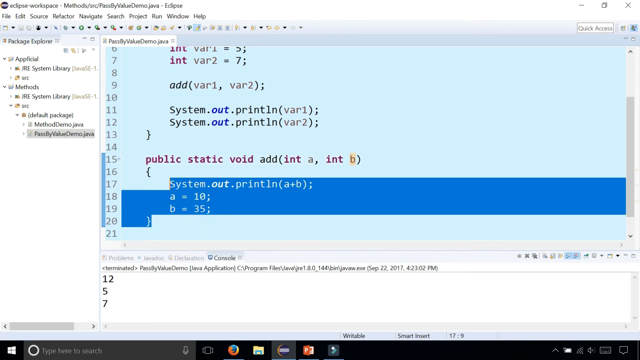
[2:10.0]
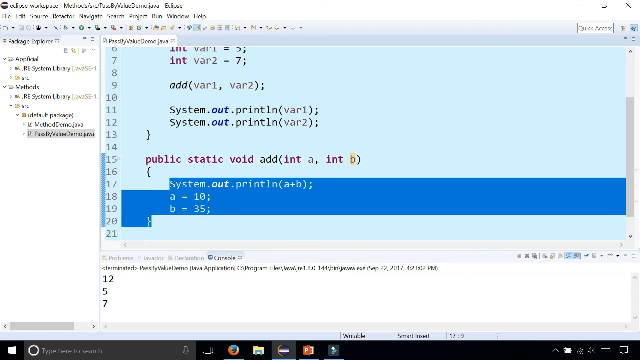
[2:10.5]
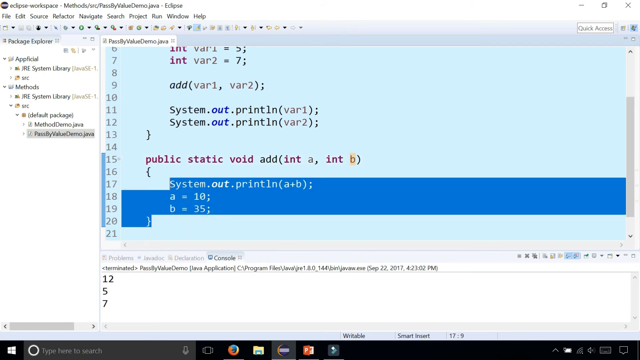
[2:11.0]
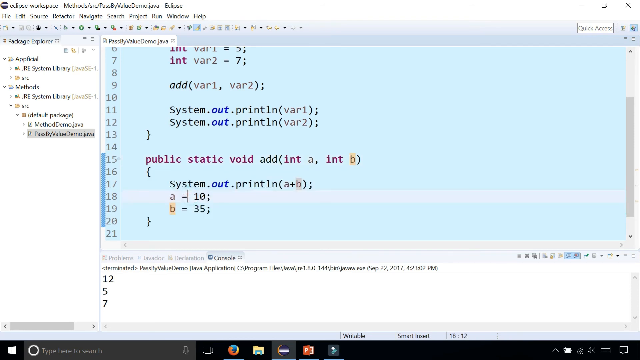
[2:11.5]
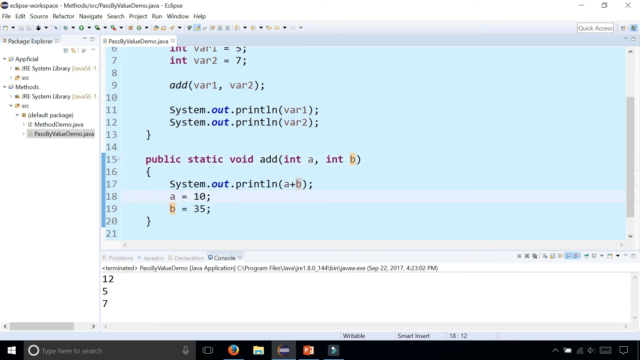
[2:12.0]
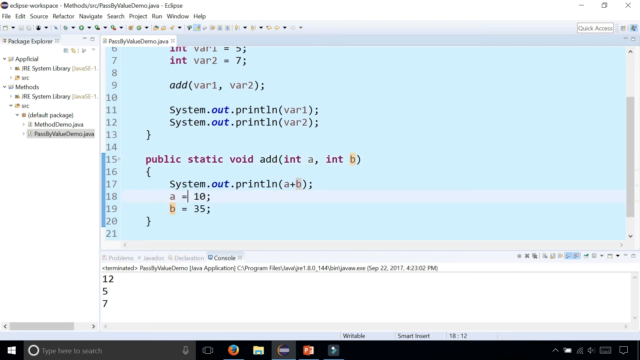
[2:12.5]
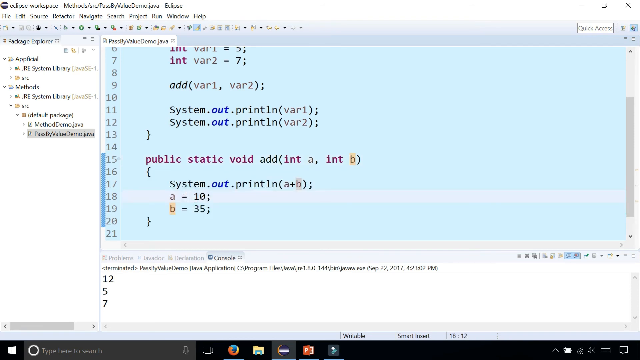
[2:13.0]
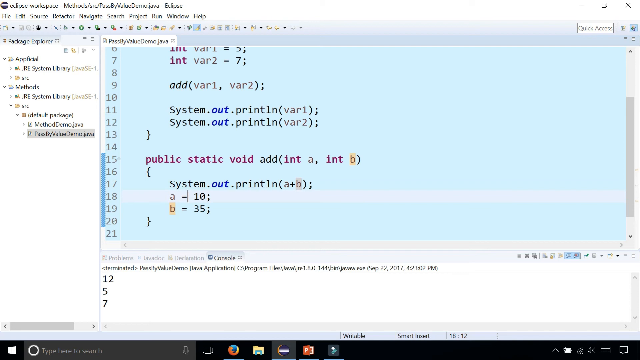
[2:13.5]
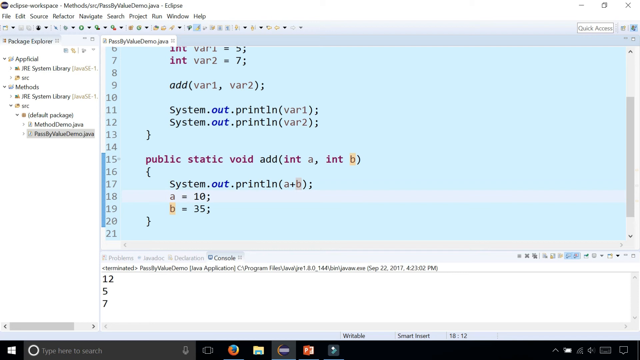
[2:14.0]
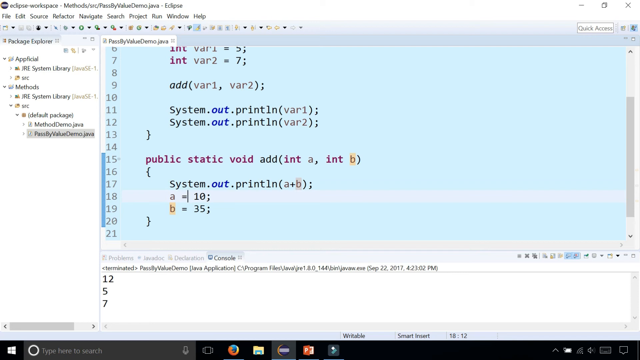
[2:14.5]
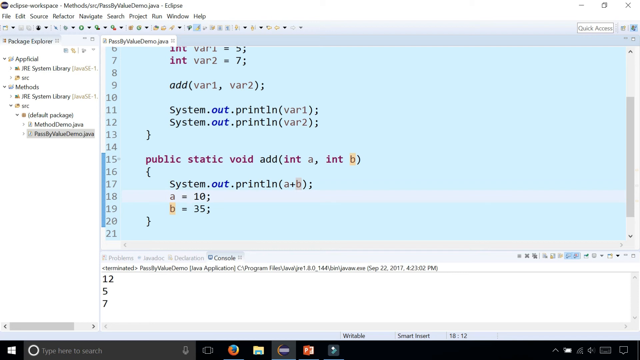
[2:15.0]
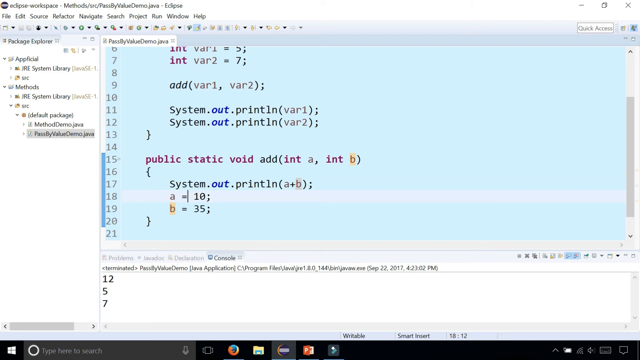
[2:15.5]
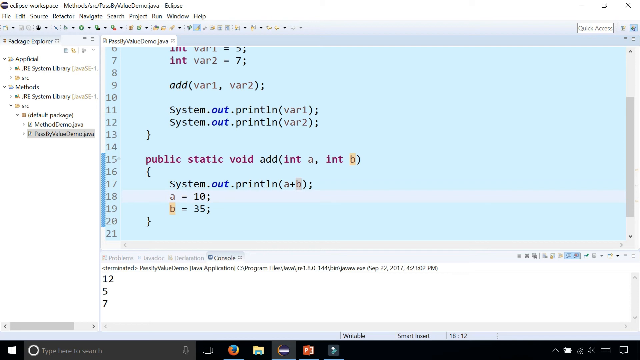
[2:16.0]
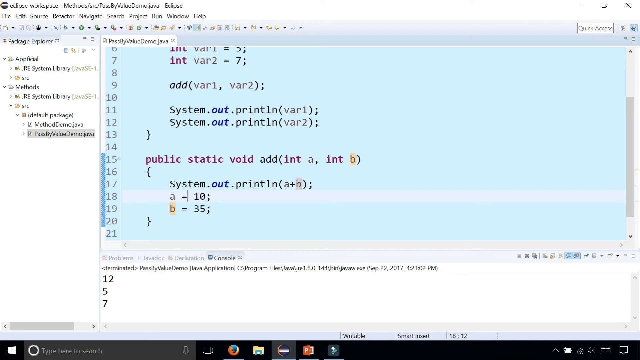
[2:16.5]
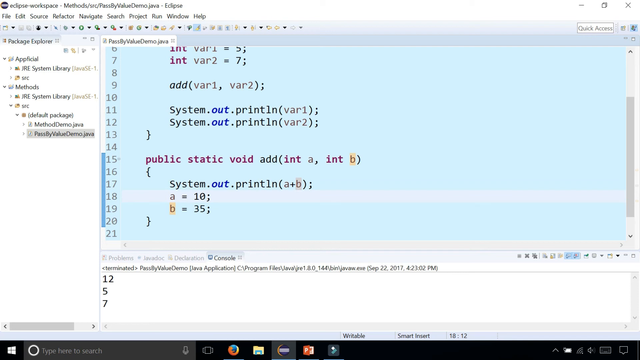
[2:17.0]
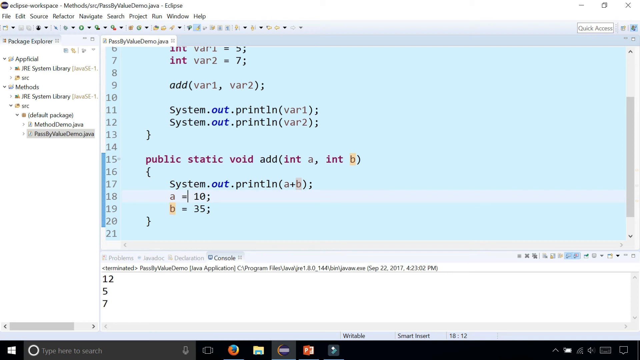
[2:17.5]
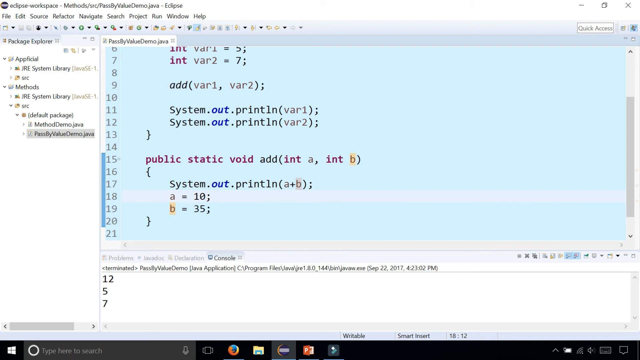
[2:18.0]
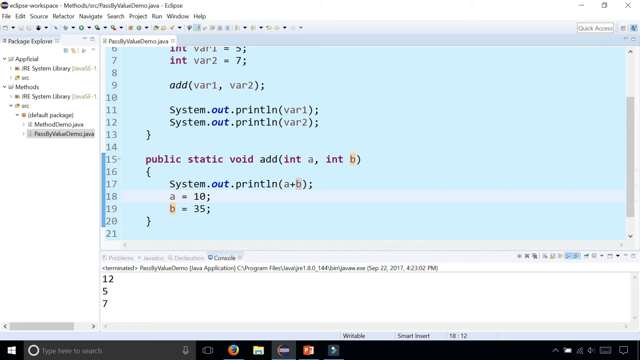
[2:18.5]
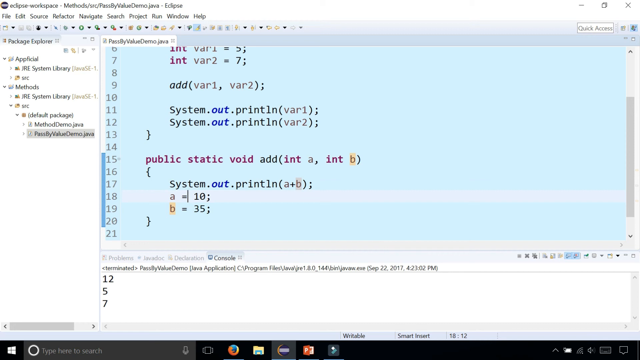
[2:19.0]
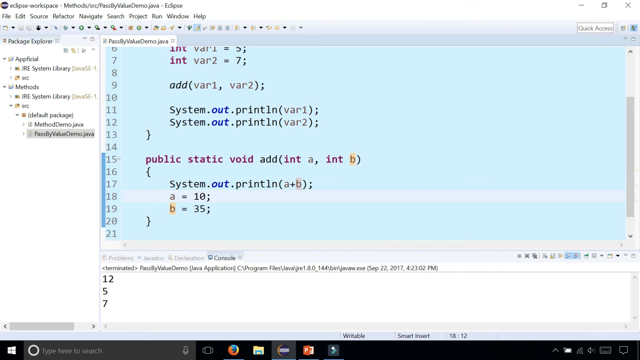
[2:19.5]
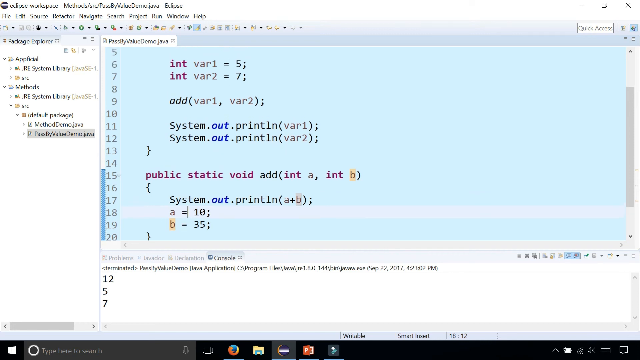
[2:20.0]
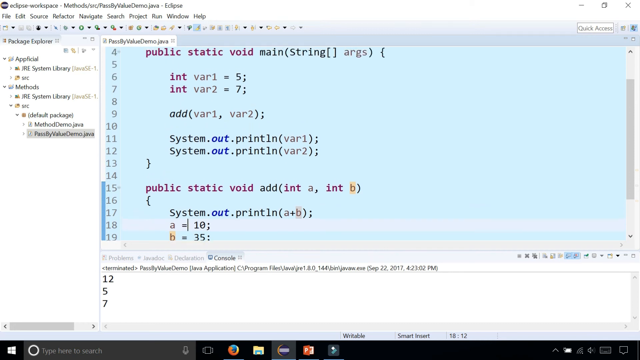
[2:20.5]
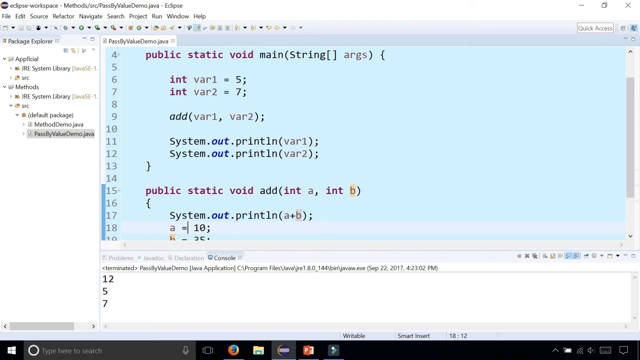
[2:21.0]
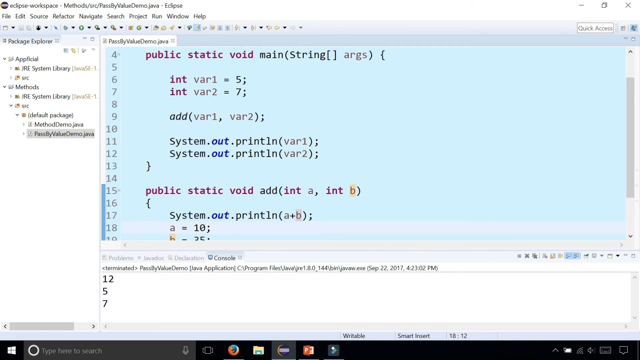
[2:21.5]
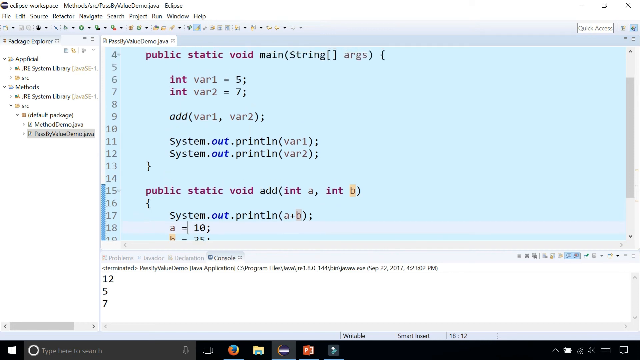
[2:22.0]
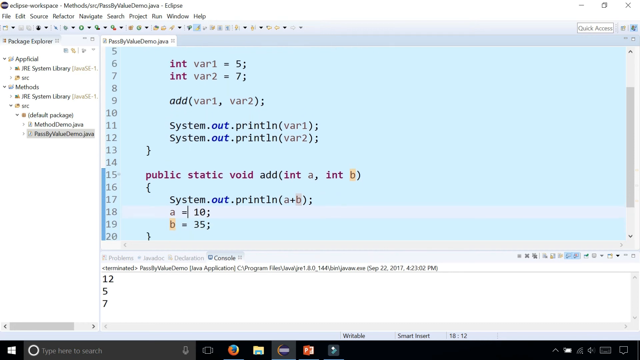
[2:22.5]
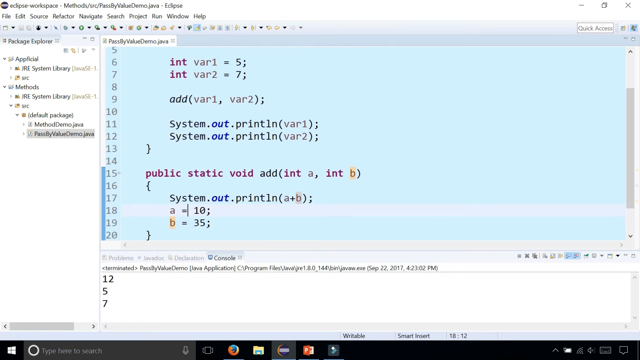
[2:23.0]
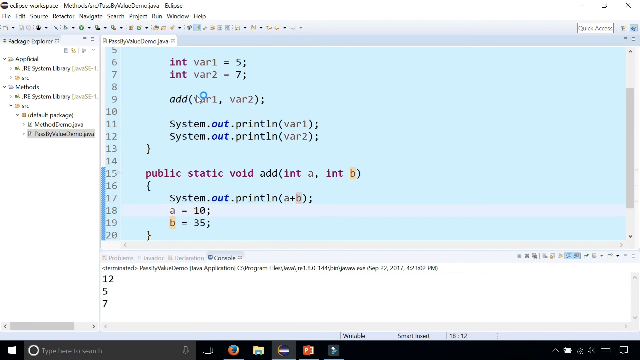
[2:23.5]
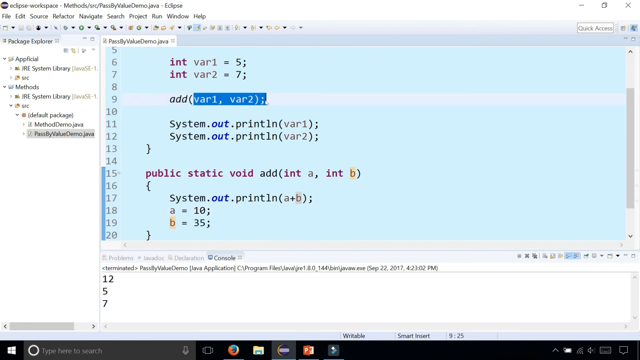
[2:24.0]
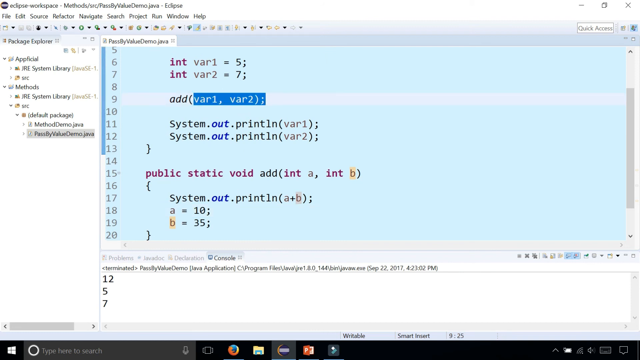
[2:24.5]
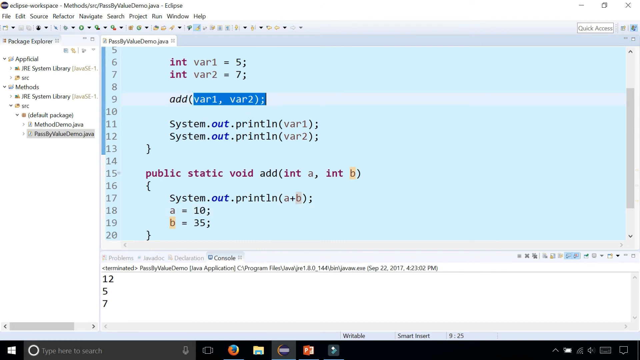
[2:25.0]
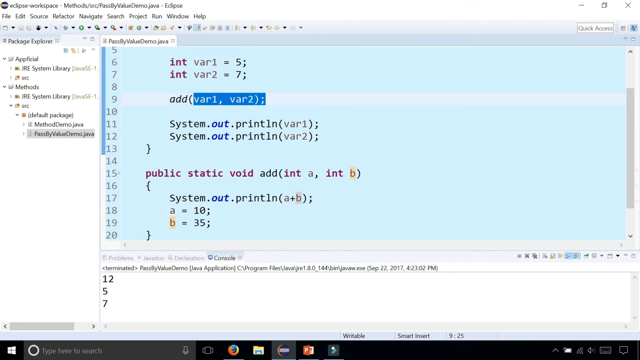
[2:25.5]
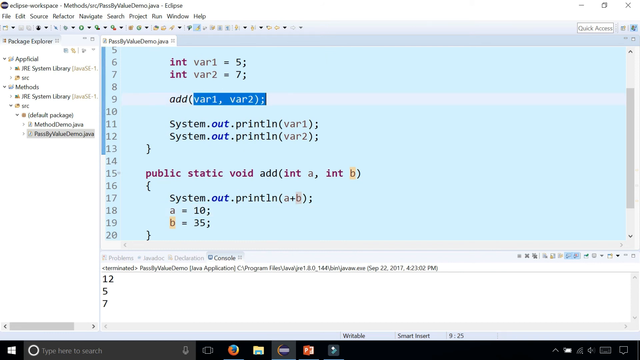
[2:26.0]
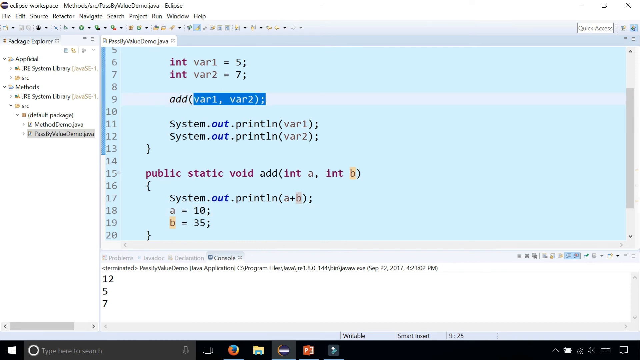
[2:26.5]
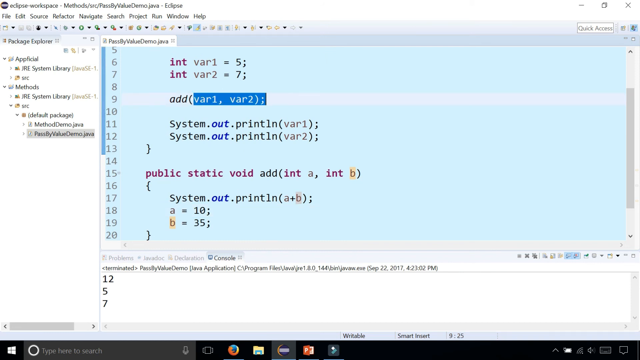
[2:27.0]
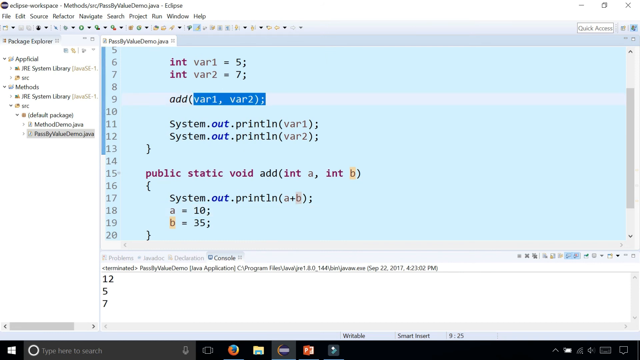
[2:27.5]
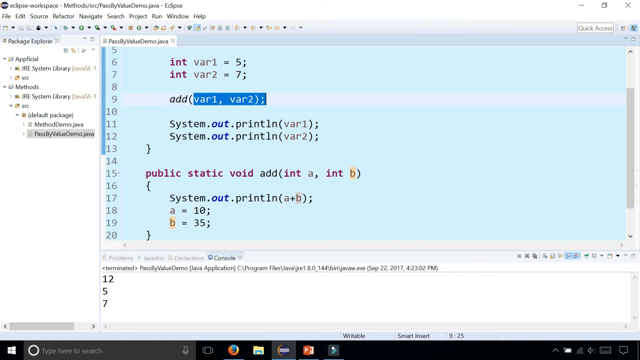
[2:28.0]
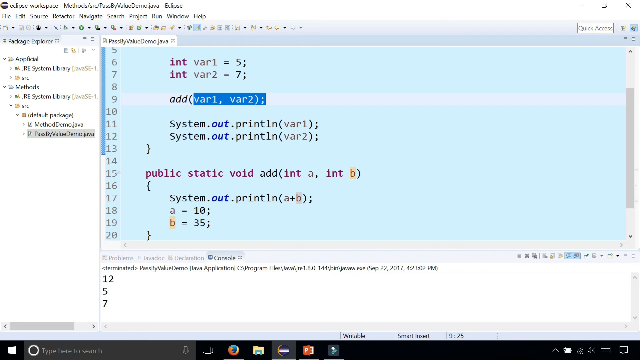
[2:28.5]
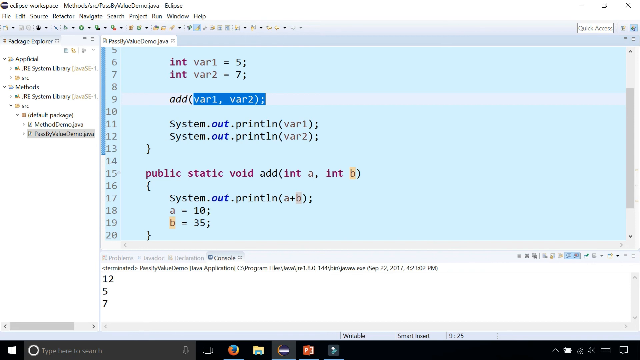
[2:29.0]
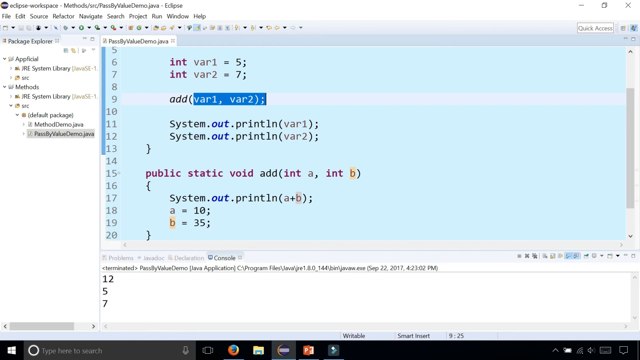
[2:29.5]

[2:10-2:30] A program called Eclipse Workplace shows its typical menu across the top (File, Edit, Source, Refactor, Navigate, Search, Project, Run, Window, Help) and a menu tree on the left including Package Explorer, JRE System Library, Default Package and PassByValueDemo.java. A work screen in the middle has a green-tinted background and is full of instructions and code. Lines 17 through 20 are highlighted, containing System.out.println(a + b);, a = 10; and b = 35;. Someone scrolls up and down, then highlights var1, var2;. A smaller screen at the bottom has tabs across its top including "Problem," "Declaration" and "Console," with the Console tab selected. It shows words like "Terminated," "Program Files" and "Java," forming a path to an executable, a date of September 22, 2017, at 4:23:02 PM, and the numbers 12, 5 and 7.